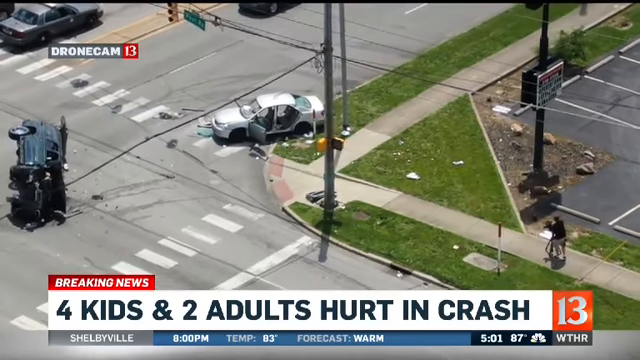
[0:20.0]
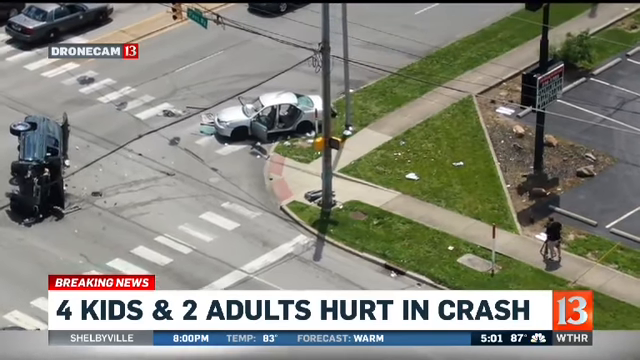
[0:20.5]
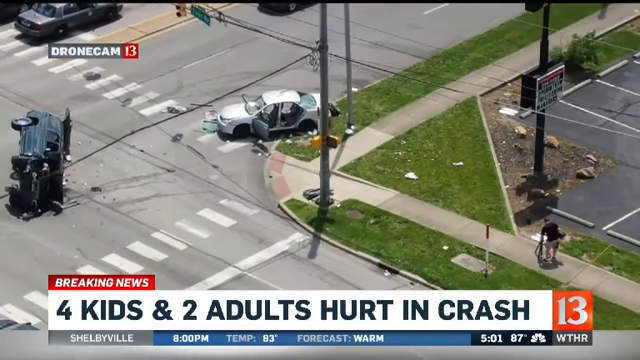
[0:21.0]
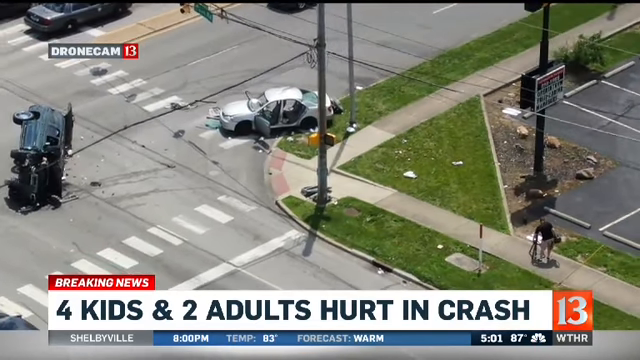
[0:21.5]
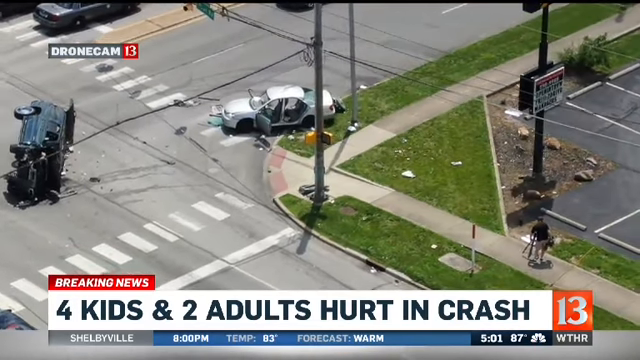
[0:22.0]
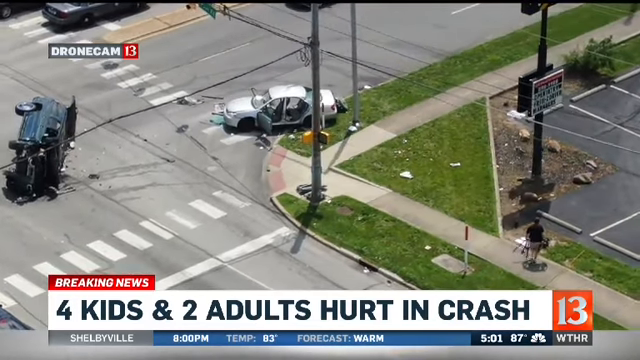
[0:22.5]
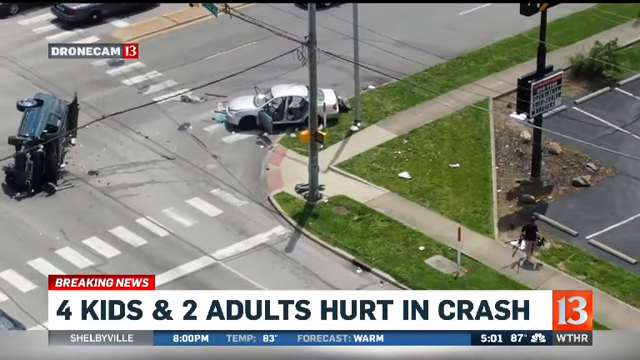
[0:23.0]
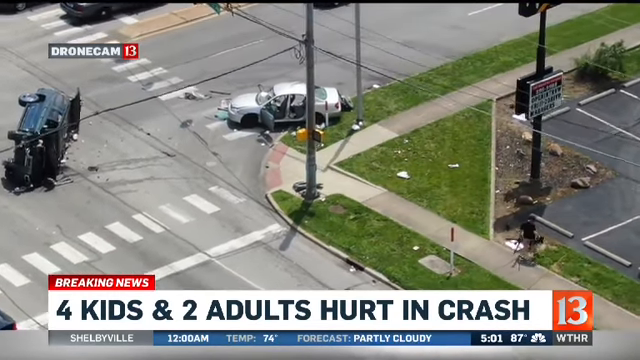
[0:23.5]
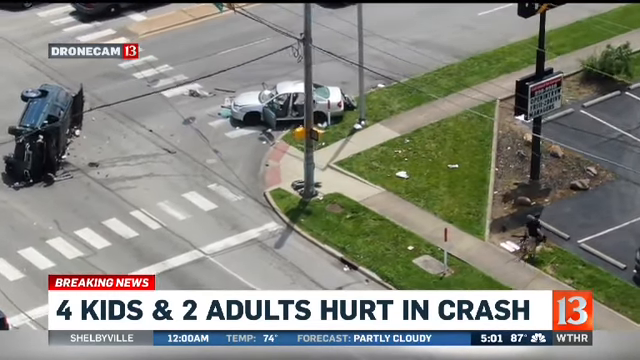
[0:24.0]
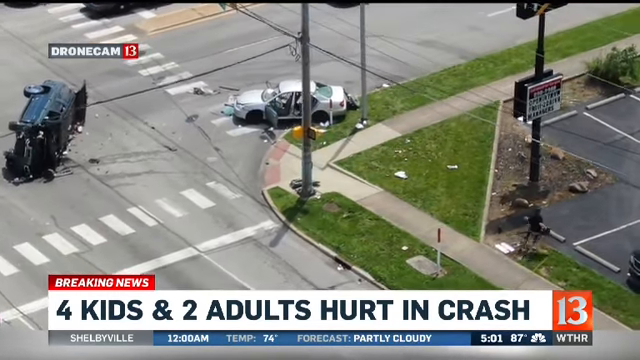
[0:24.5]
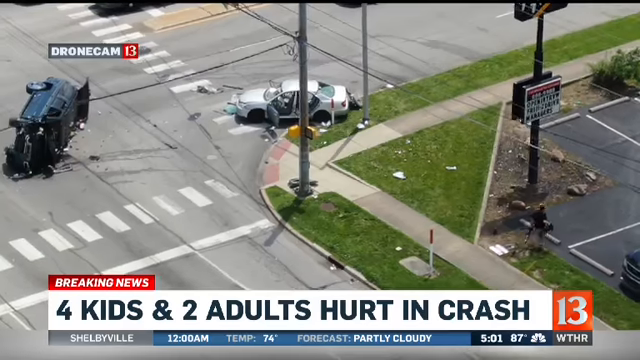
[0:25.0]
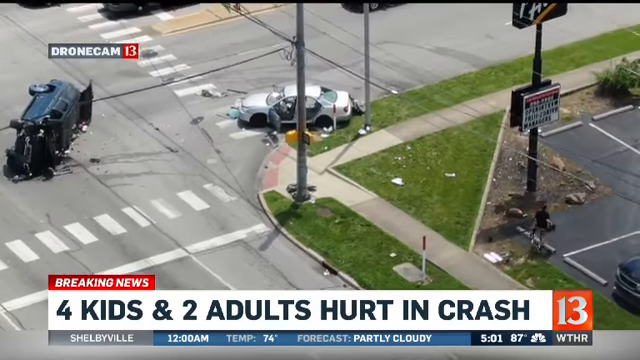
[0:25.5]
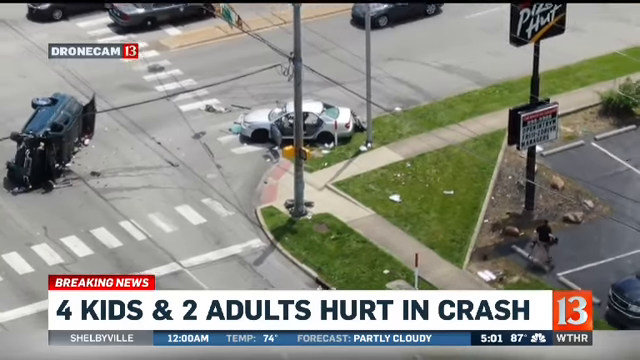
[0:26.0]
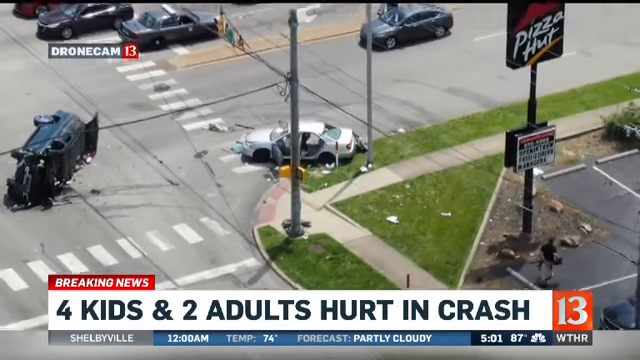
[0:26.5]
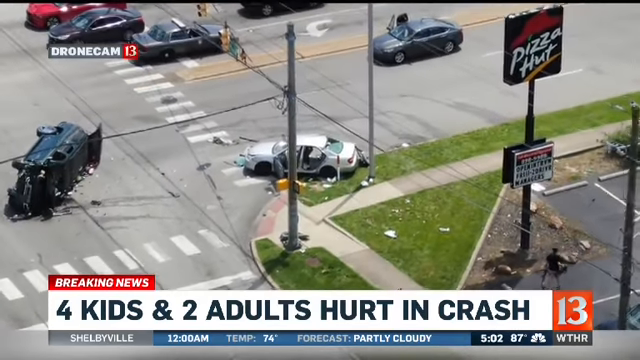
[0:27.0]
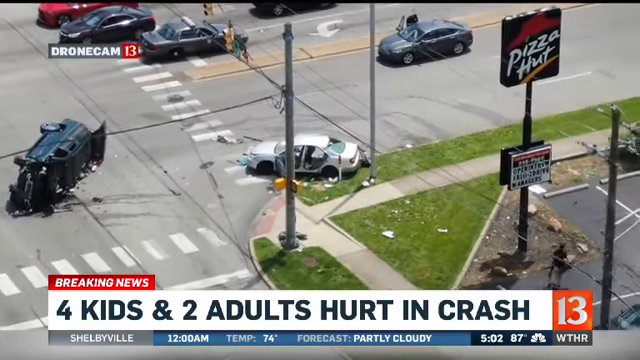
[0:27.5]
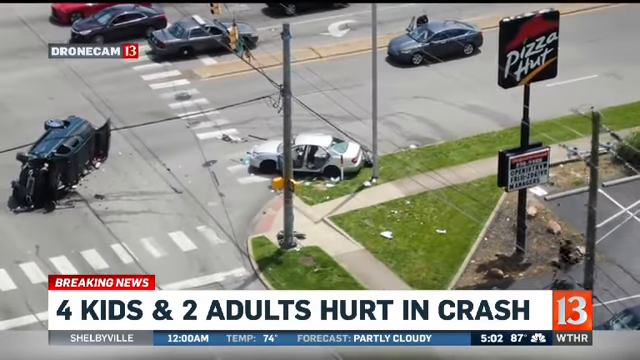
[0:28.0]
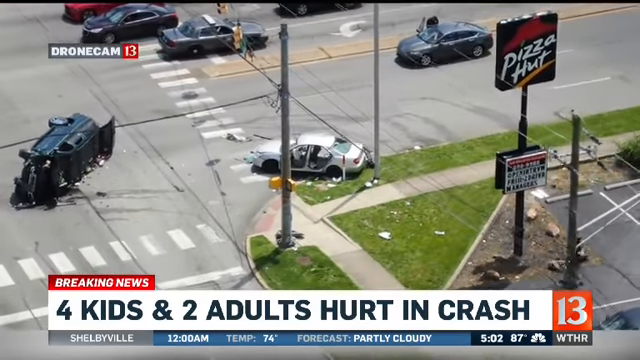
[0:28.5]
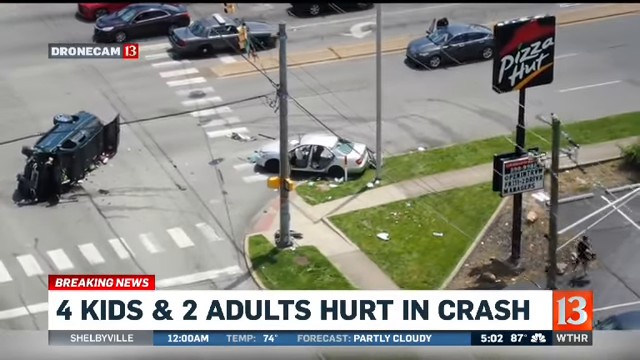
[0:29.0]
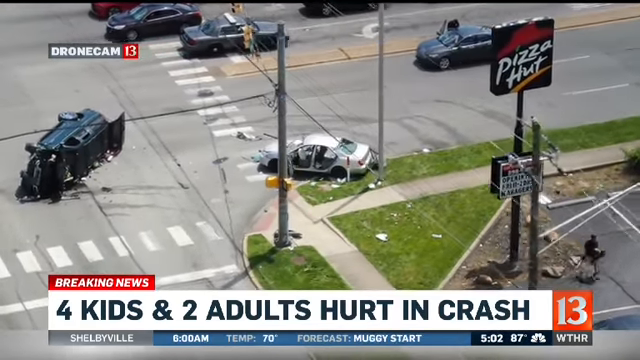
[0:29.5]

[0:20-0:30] Footage from "drone cam 13" shows a serious car accident between two cars, one black and one white. The black car is in the middle of the intersection, and the white car is backed into the side of the road by a sidewalk. A banner along the bottom of the screen reads "four kids and two adults hurt" as part of a breaking news report. The crash happened by a Pizza Hut, whose very tall sign stands on the corner of the street. Car debris is all over the scene.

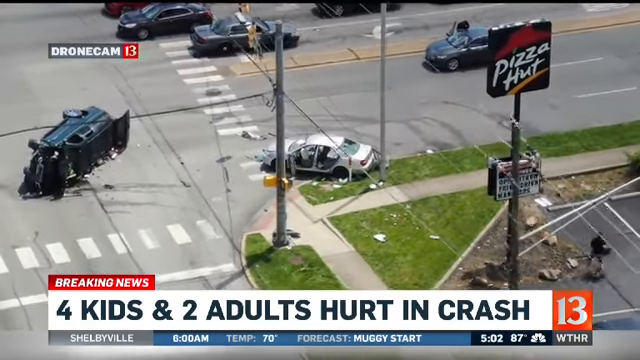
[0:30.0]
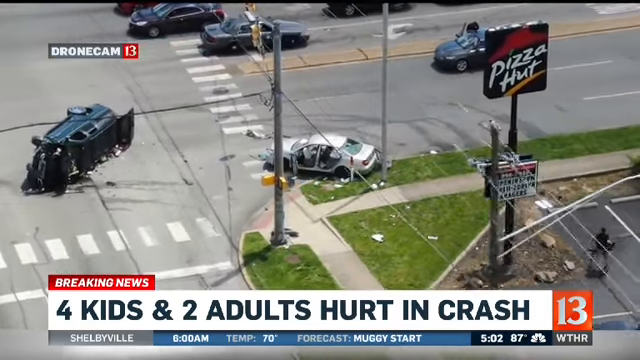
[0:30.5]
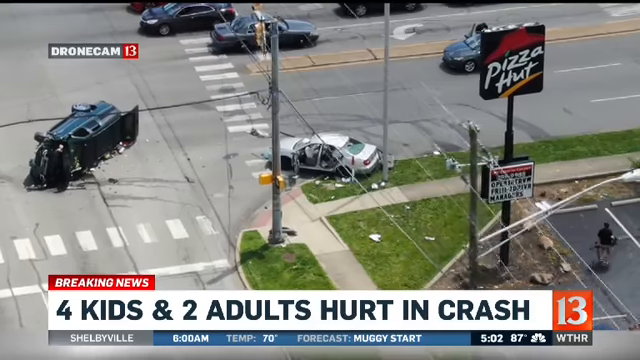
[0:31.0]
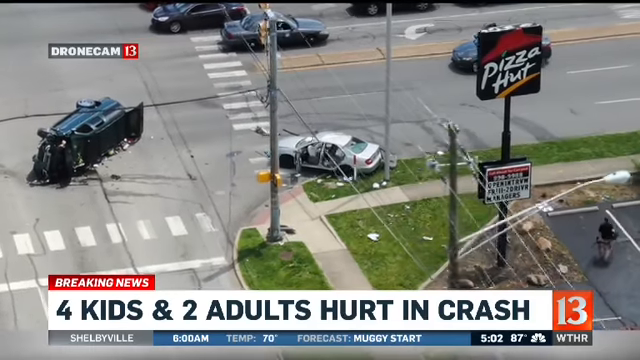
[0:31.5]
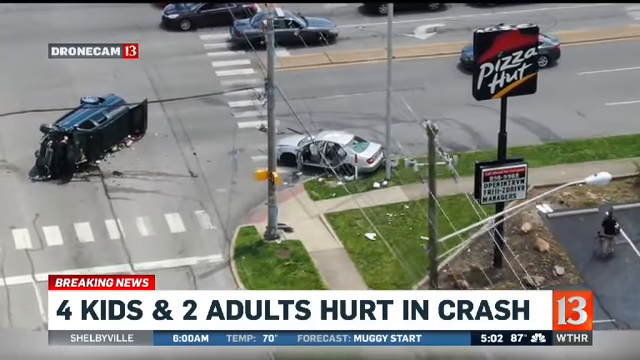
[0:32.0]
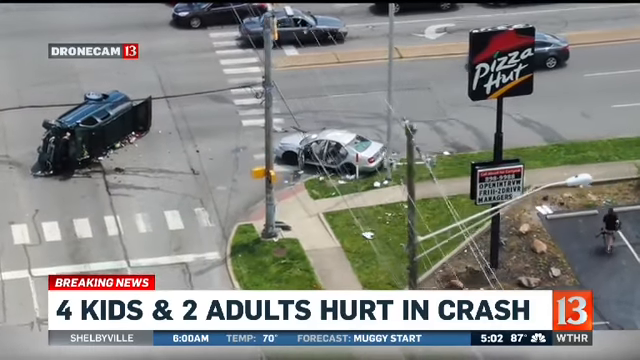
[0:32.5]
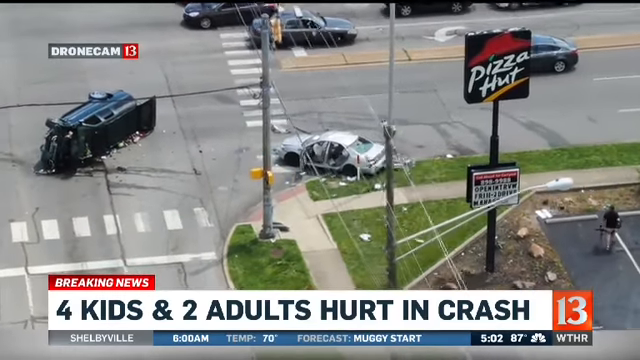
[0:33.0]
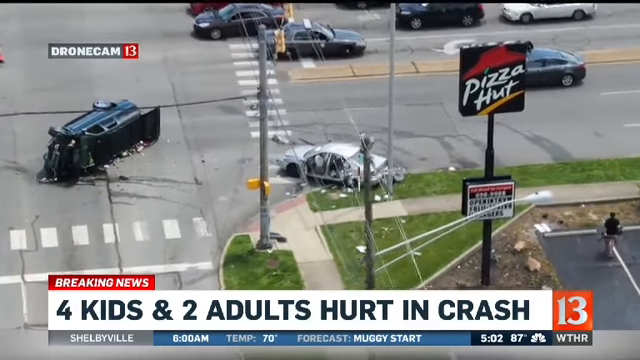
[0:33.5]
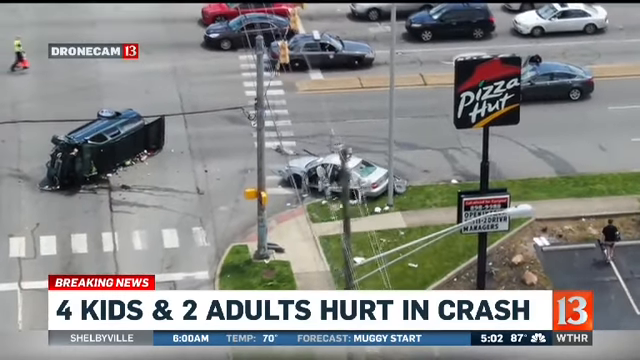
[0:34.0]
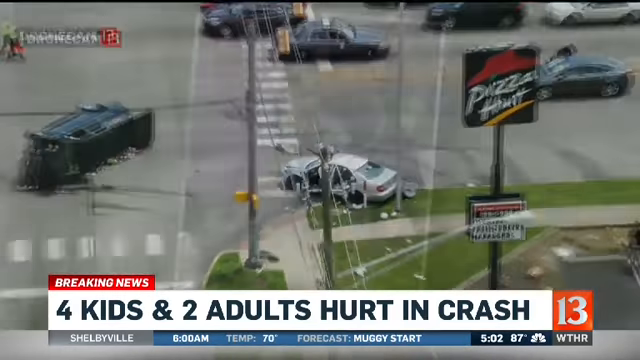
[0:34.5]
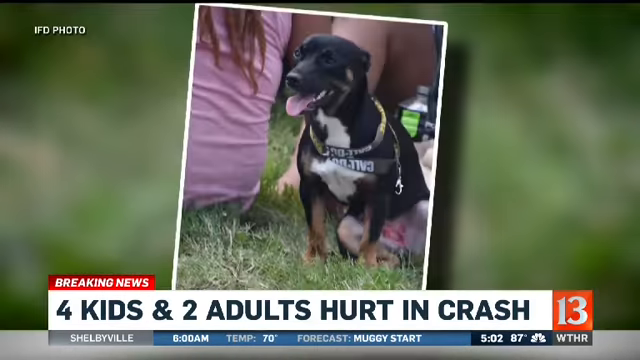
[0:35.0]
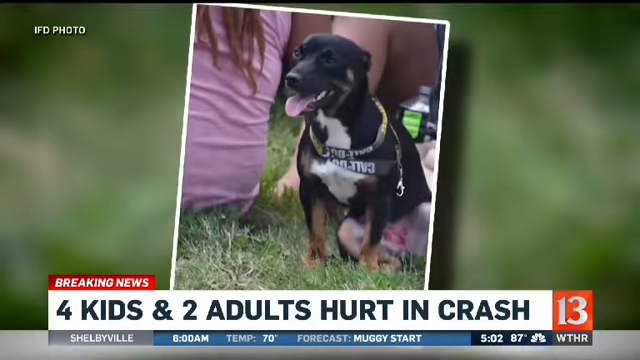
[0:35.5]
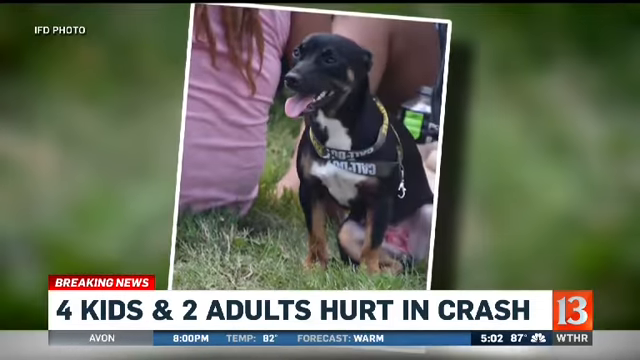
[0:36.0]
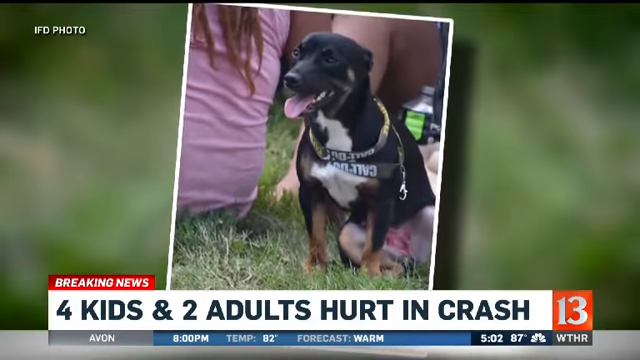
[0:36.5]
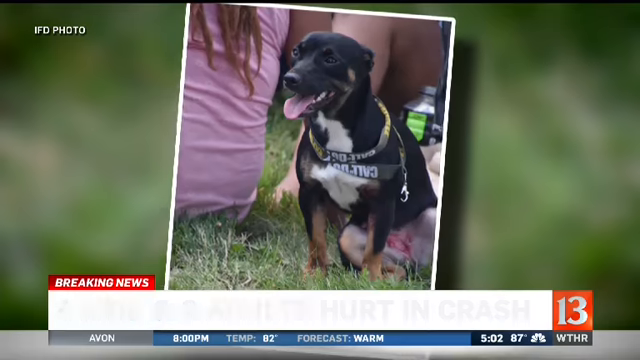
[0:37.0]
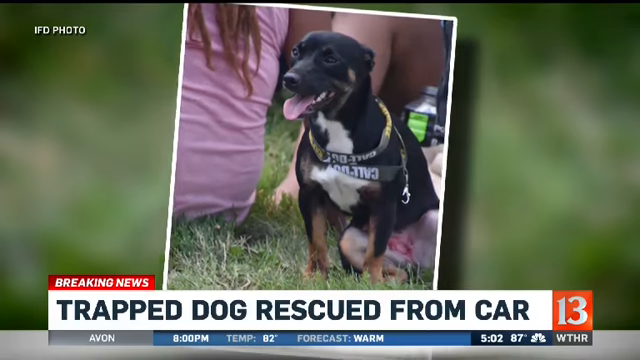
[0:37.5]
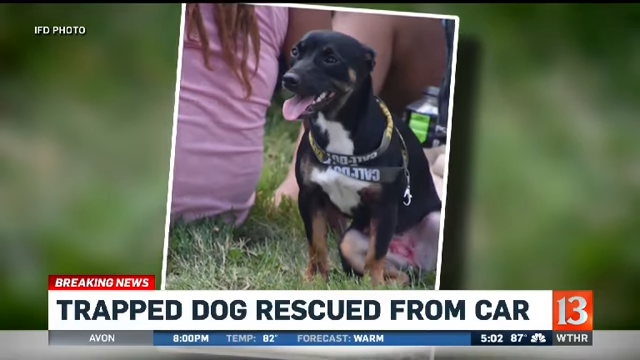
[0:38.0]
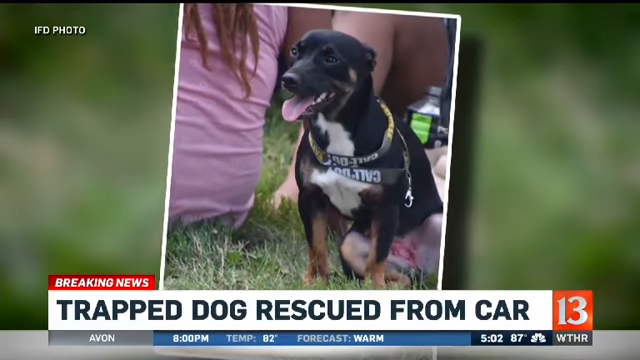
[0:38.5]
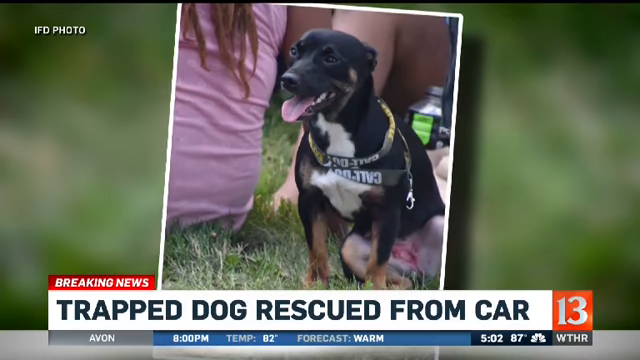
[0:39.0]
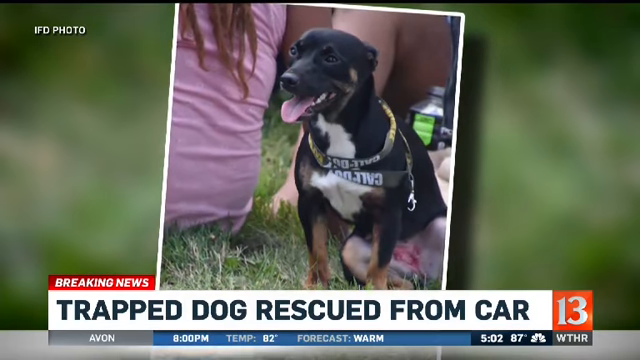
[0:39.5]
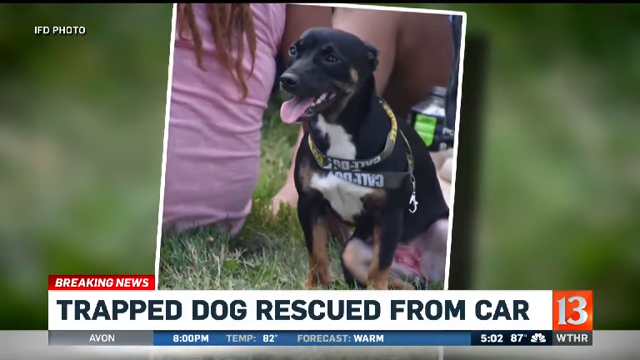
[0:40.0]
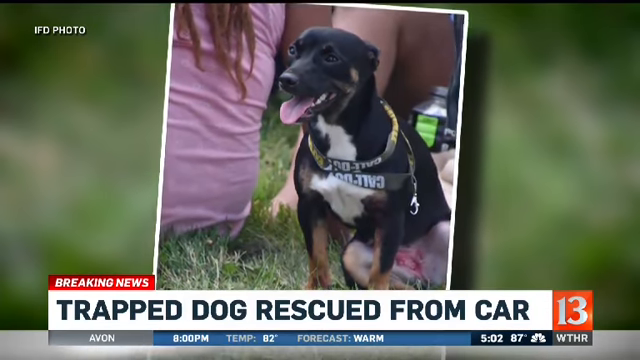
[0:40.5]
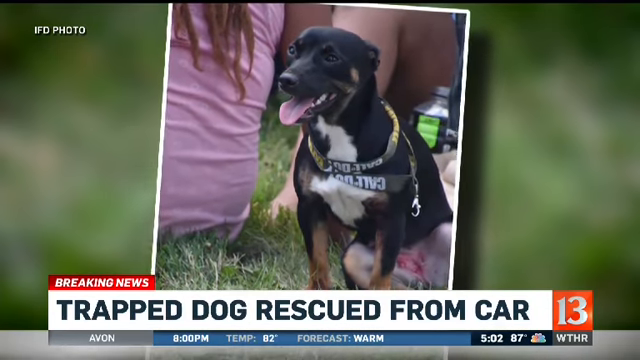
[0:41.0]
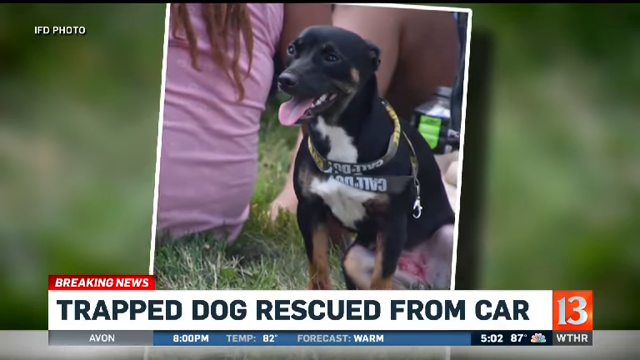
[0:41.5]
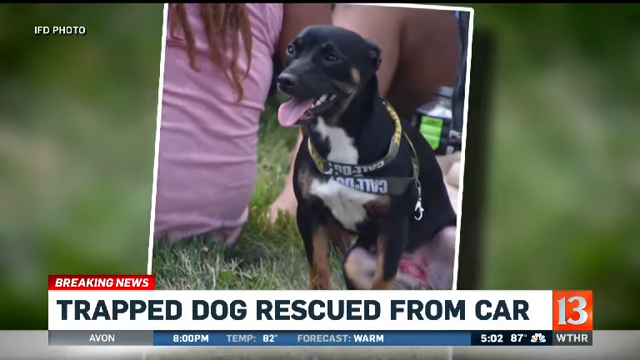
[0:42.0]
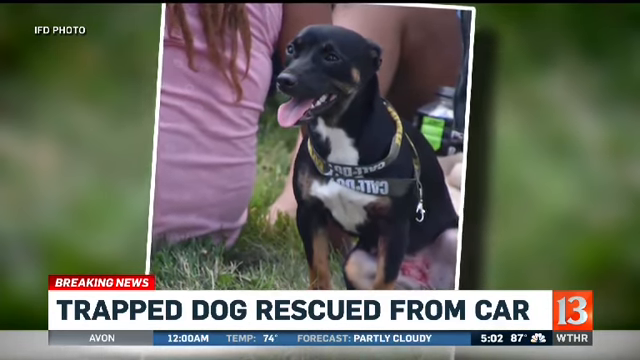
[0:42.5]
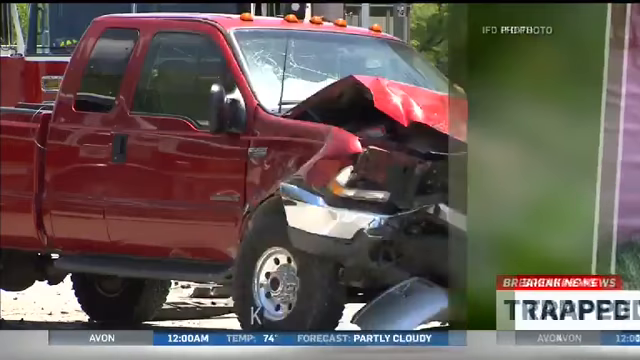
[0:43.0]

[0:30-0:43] The serious accident involves a black car and a white car. The black car is in the middle of the intersection, and the white car is backed into an area on the side of the road near a sidewalk. Some cars are on the street, including a brown one going the wrong way, opposite to an arrow showing the direction for a turn. A Pizza Hut sign is on the corner of the street where the crash happened. Breaking news text reads "four kids and two adults hurt in a crash." The report then switches to another breaking news story from channel 13, "trapped dog rescued from car," and at the end shows a red pickup truck that had been in an accident.